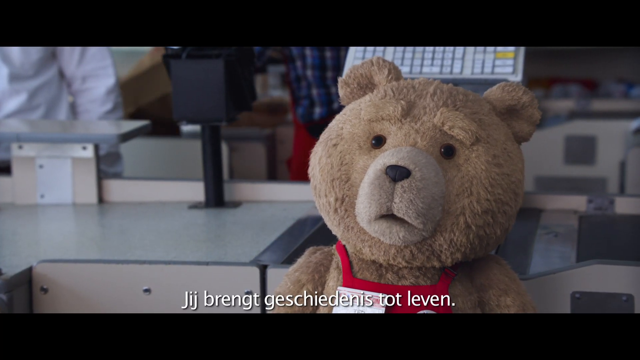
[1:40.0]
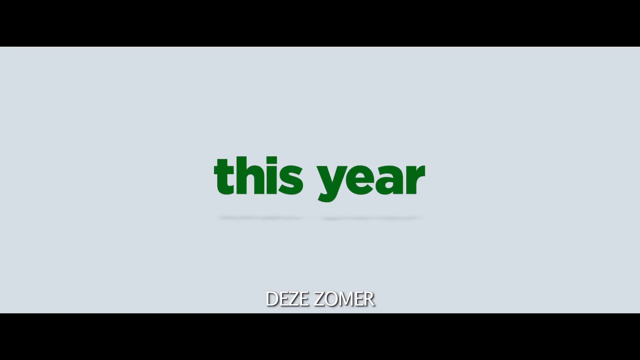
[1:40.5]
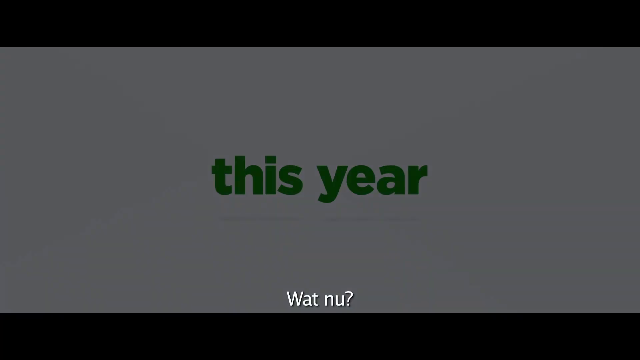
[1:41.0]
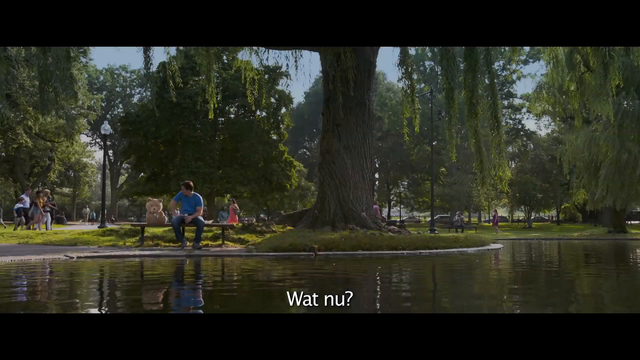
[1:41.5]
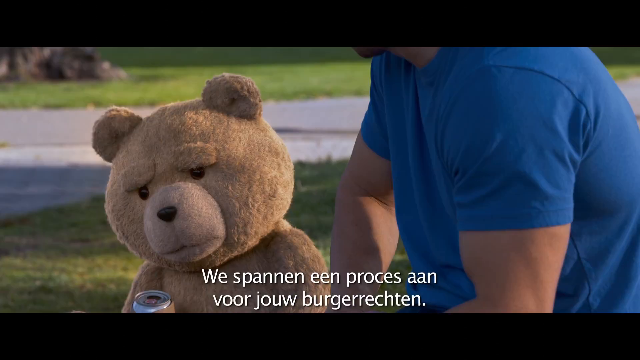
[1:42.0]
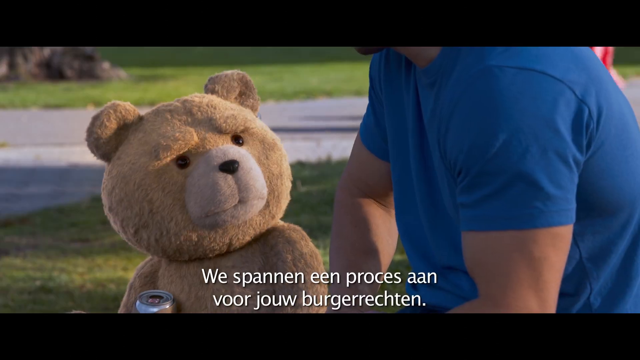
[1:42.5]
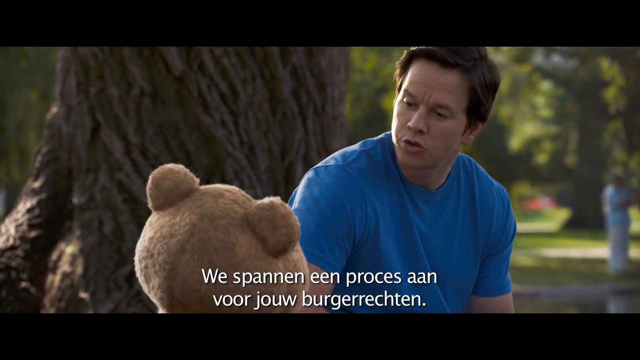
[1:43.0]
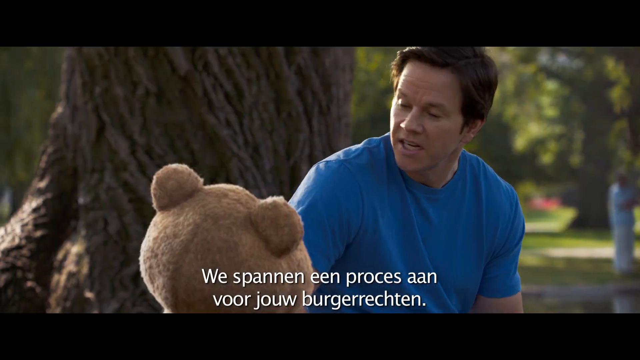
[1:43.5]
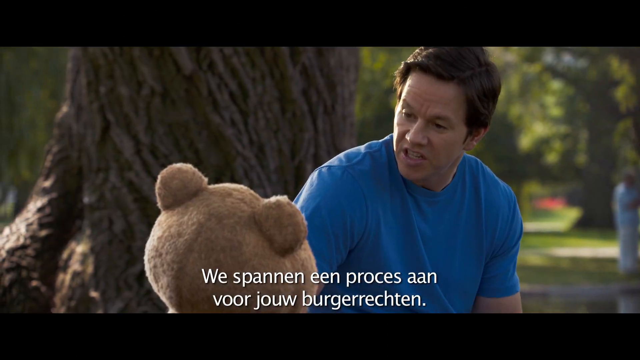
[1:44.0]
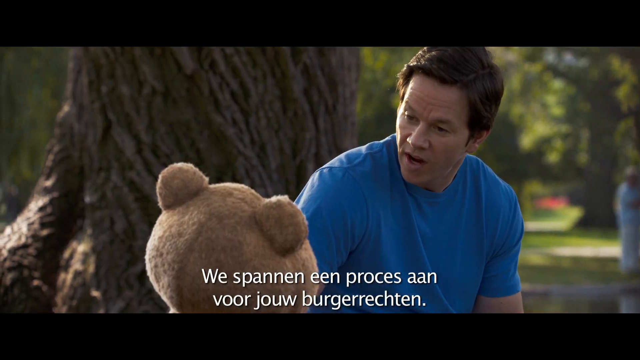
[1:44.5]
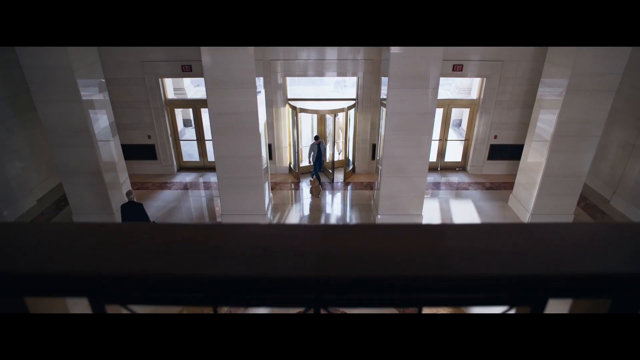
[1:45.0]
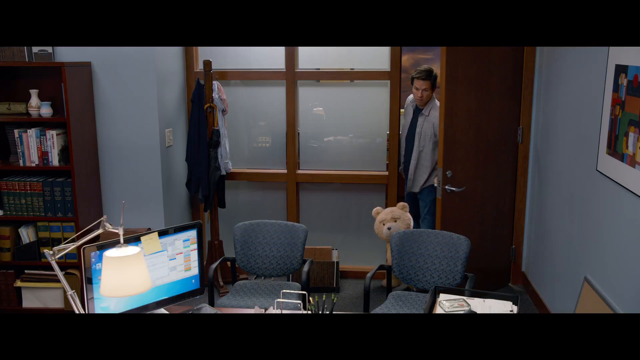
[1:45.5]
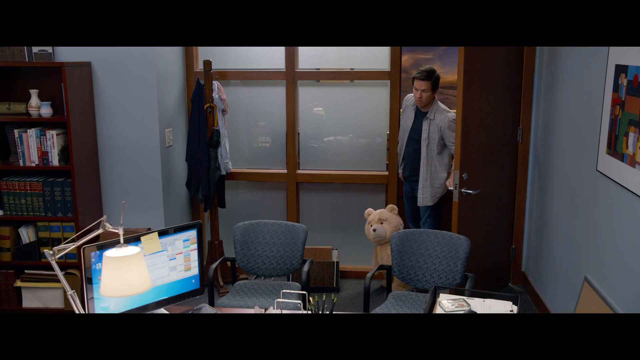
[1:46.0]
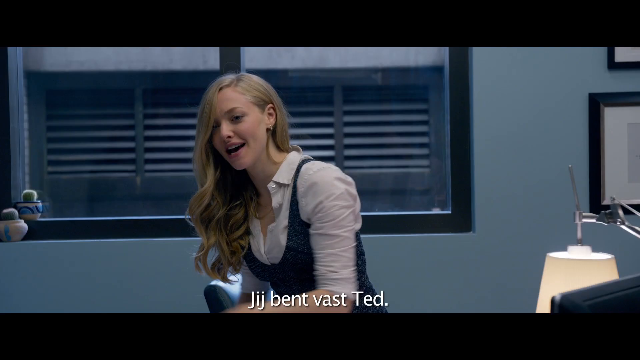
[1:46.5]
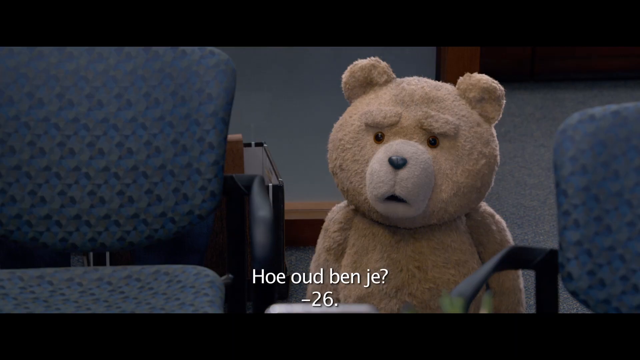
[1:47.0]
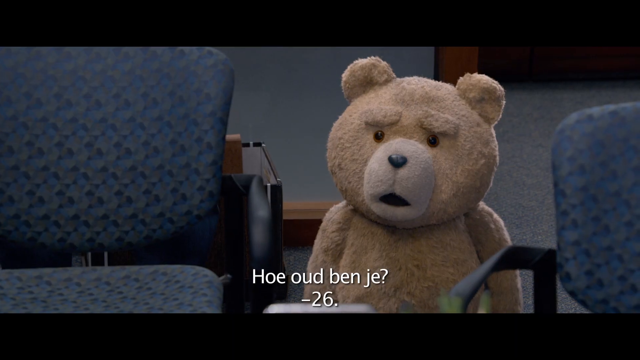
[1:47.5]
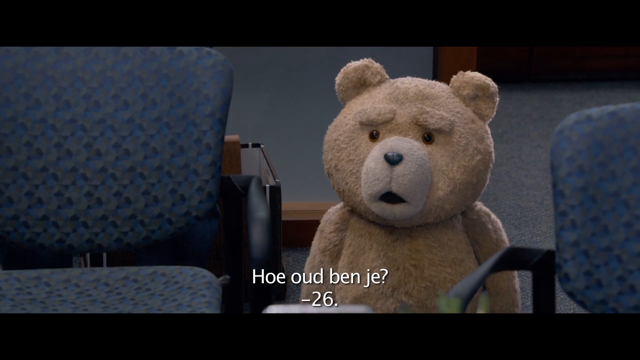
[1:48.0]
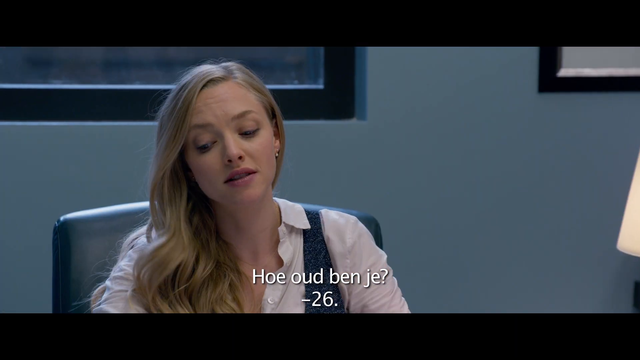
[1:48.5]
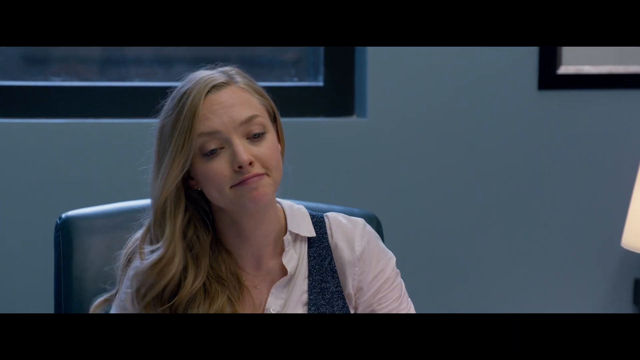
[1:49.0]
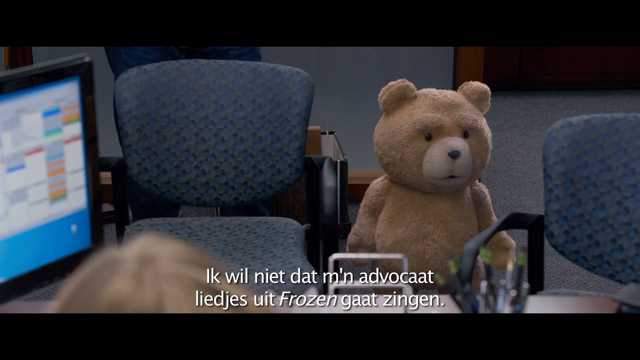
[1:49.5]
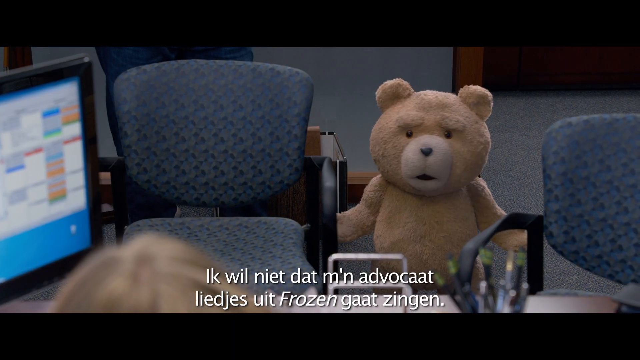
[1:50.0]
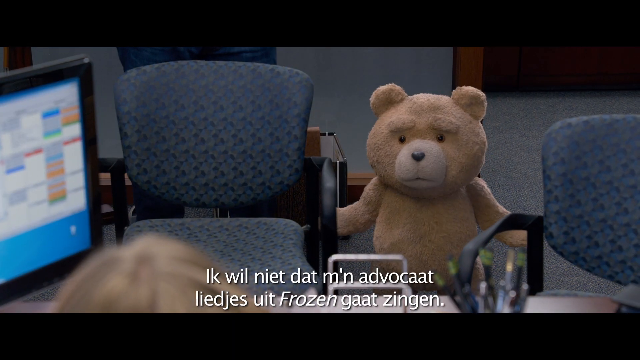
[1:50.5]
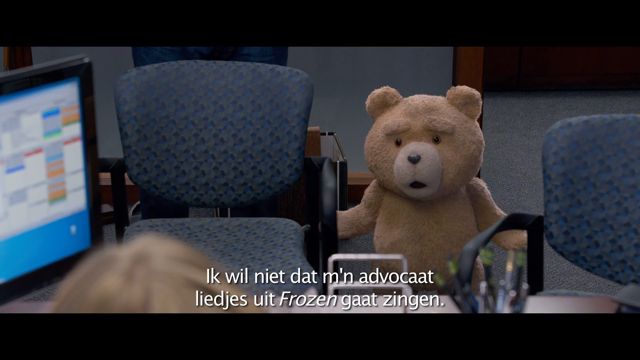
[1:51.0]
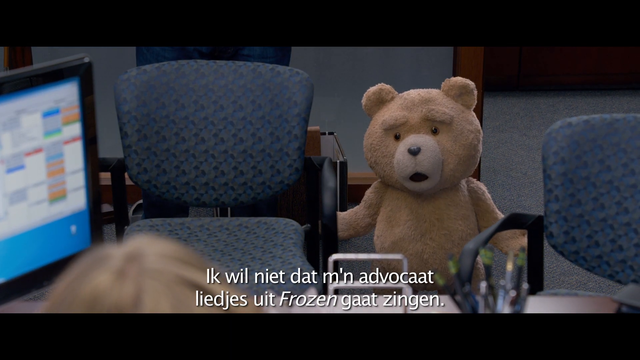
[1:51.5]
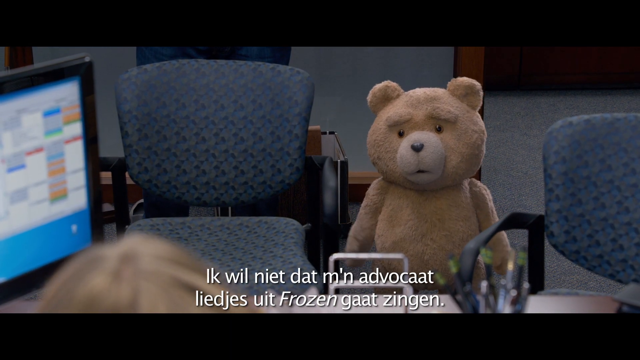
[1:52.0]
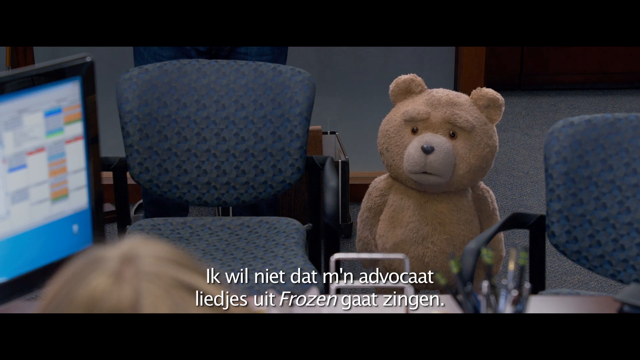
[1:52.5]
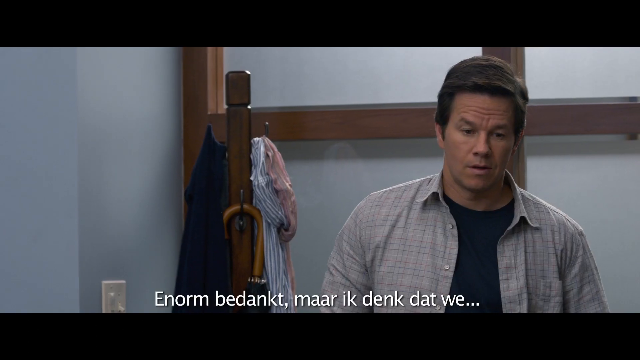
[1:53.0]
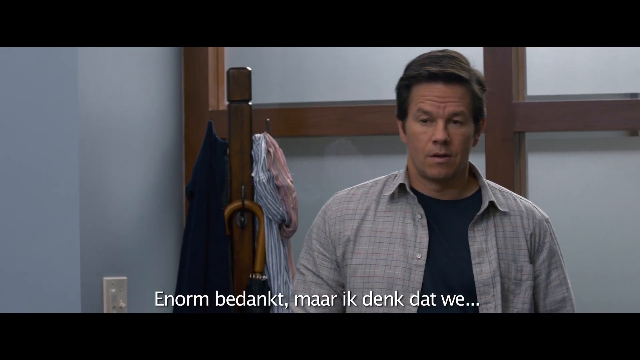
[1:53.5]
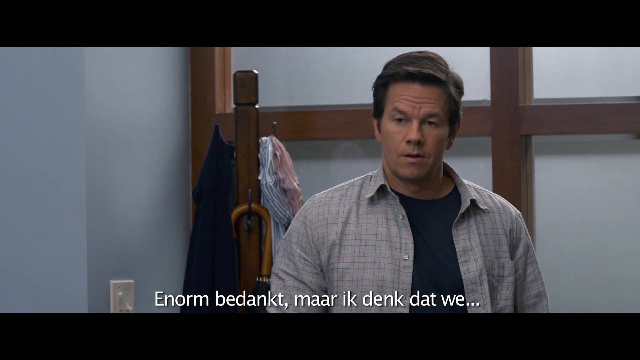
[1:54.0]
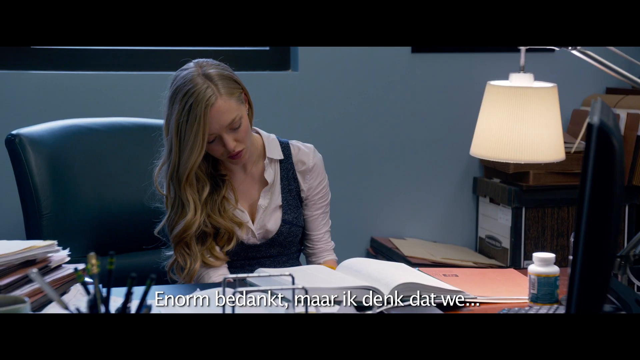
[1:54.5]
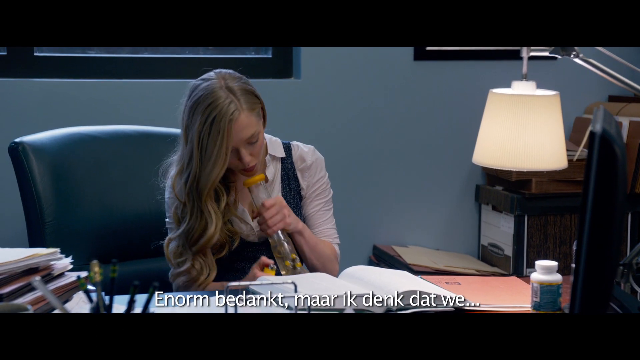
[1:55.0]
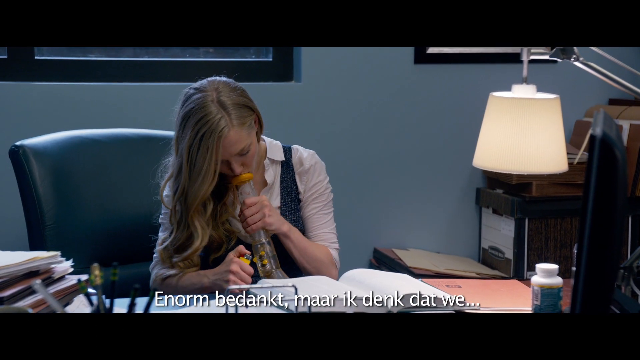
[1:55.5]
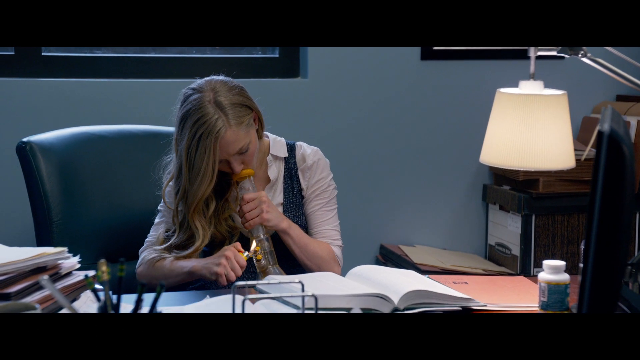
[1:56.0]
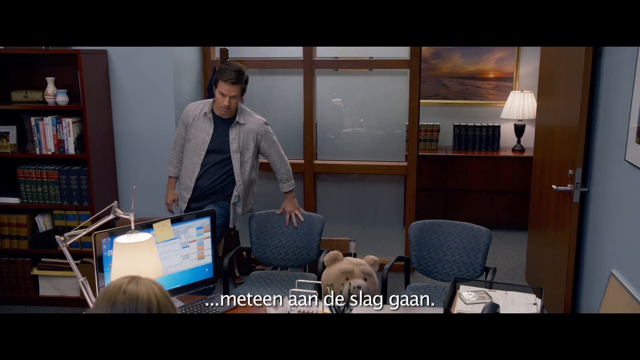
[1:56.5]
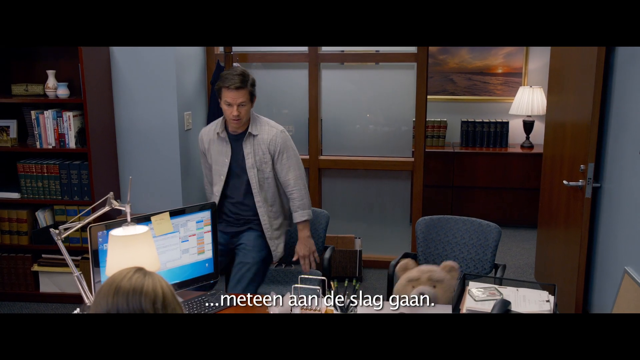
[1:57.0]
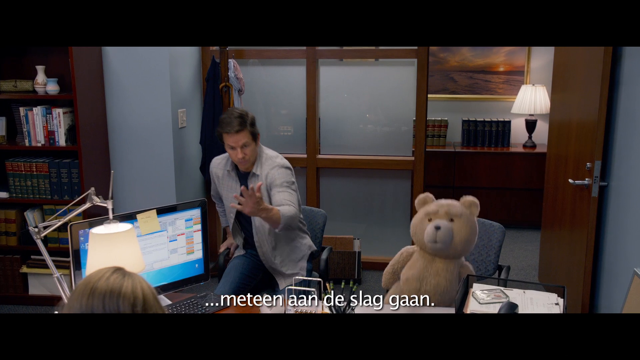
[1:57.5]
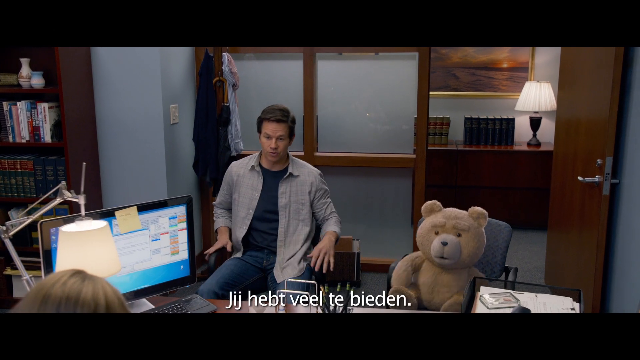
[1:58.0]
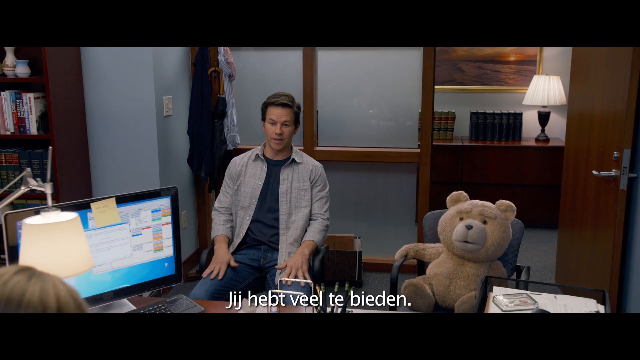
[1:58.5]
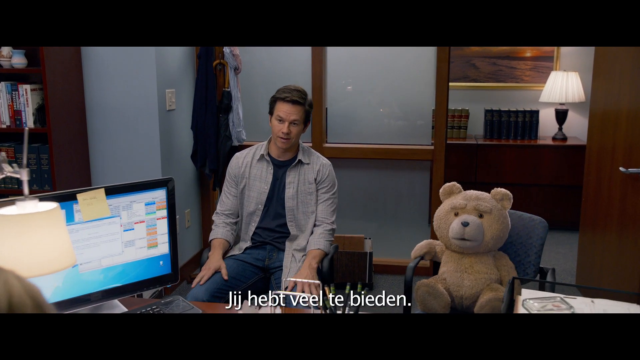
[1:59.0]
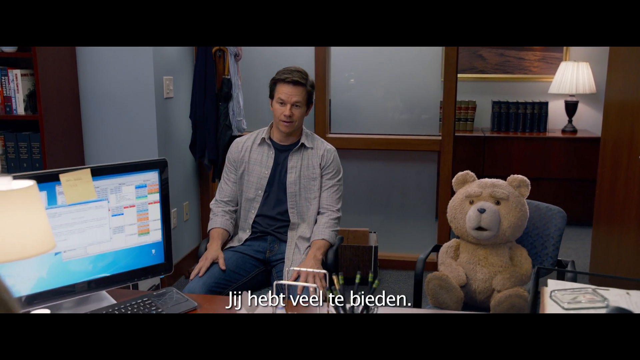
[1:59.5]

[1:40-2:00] Another credit appears: green lowercase text on a white background reads "this year" in bold. The actor and the teddy bear sit on a park bench, with a large tree to the right, a pond in front of them and people in the background. Close-ups of the teddy bear and then the actor follow. An aerial view shows the inside of an office building with large white marble pillars in the foyer, and the two walk into an office. A young woman with long, wavy blonde hair, different from the woman at the grocery store, wears a white button-down shirt open at the top under a dark blue jumper dress. She talks and smiles, and appears to be sitting behind a desk. The teddy bear talks to her from the other side of the desk. The actor's reaction is shown; he stands without talking much, wearing a black T-shirt under an unbuttoned light tan button-down.